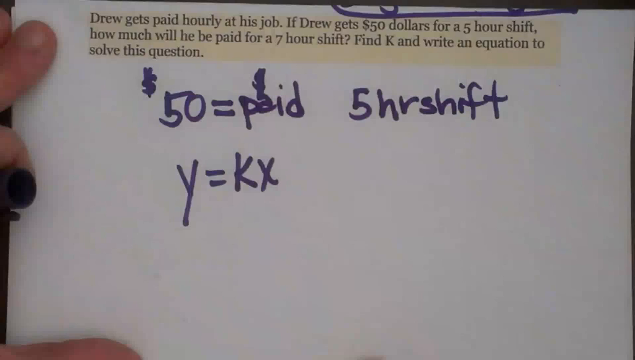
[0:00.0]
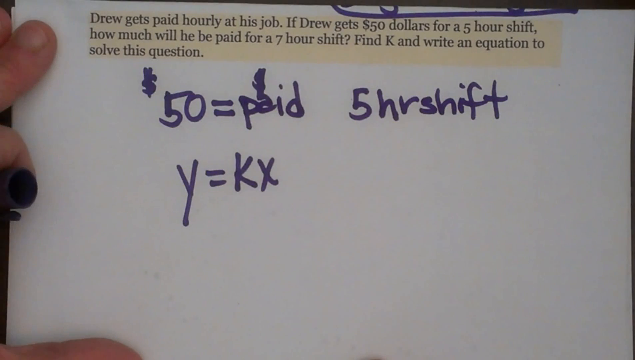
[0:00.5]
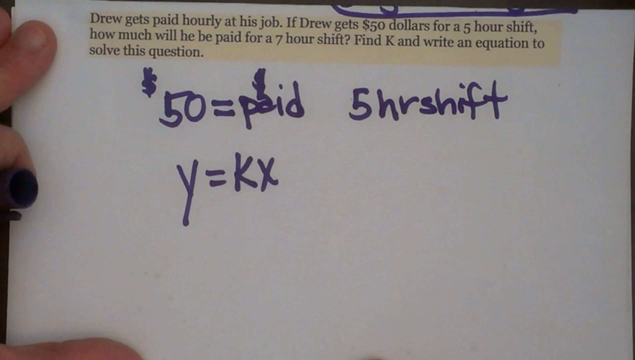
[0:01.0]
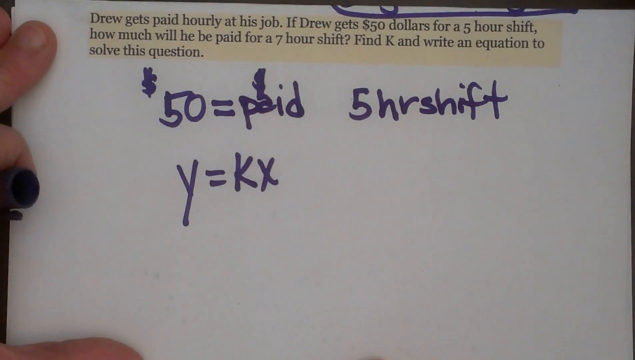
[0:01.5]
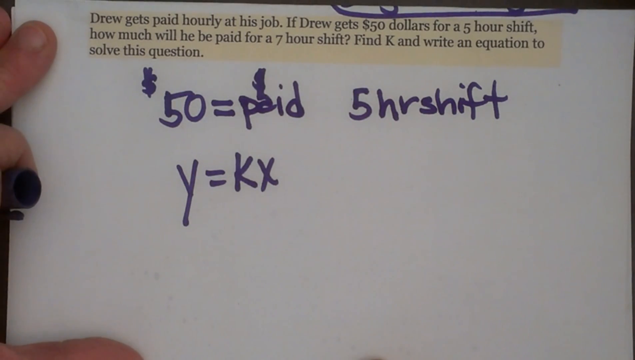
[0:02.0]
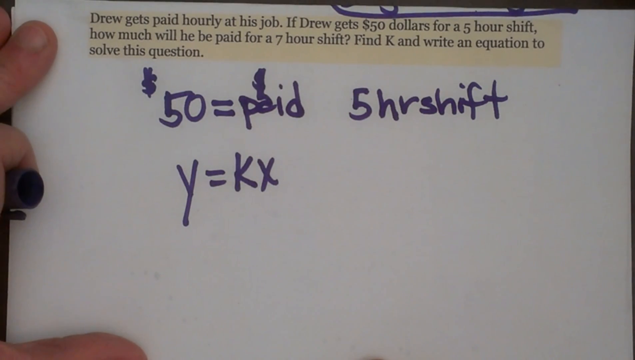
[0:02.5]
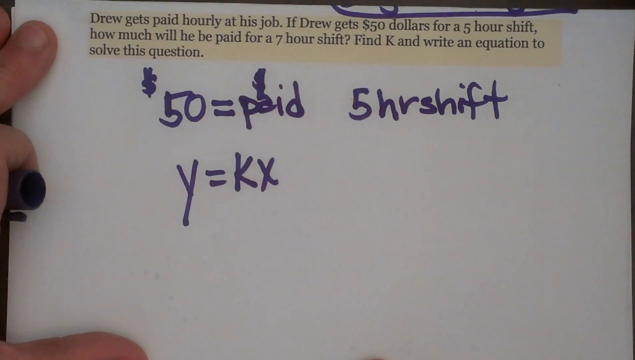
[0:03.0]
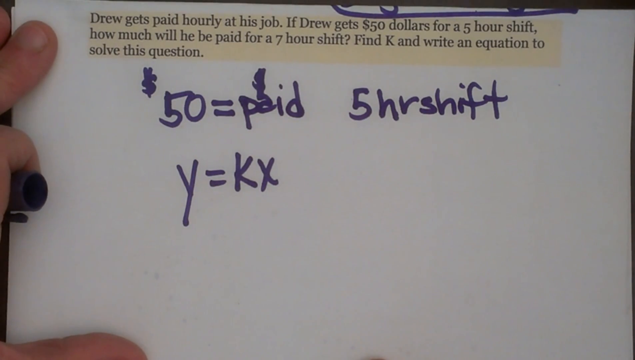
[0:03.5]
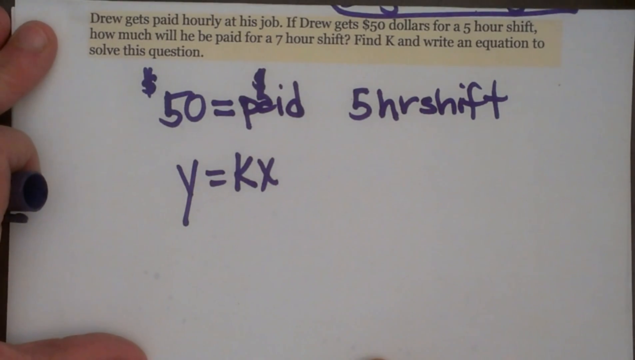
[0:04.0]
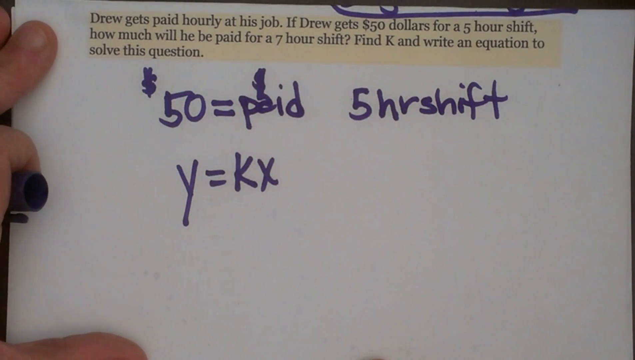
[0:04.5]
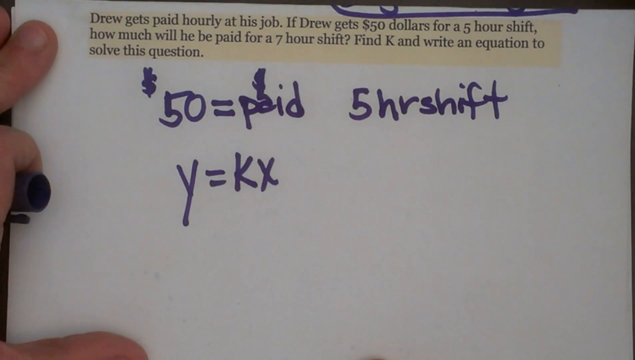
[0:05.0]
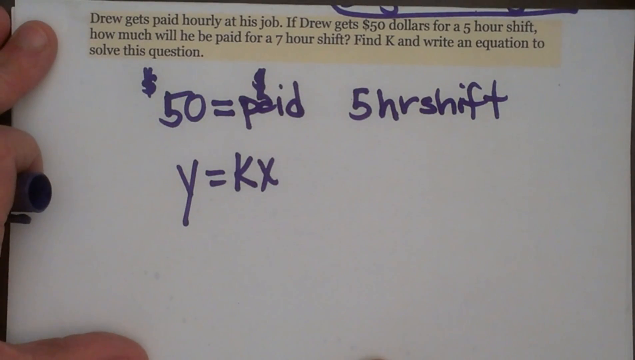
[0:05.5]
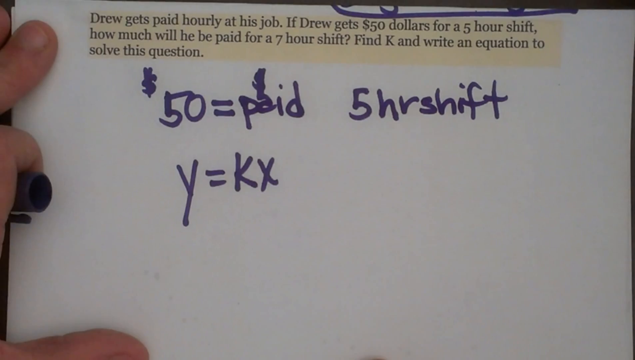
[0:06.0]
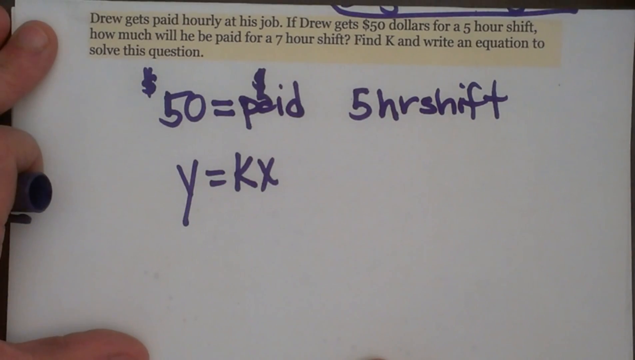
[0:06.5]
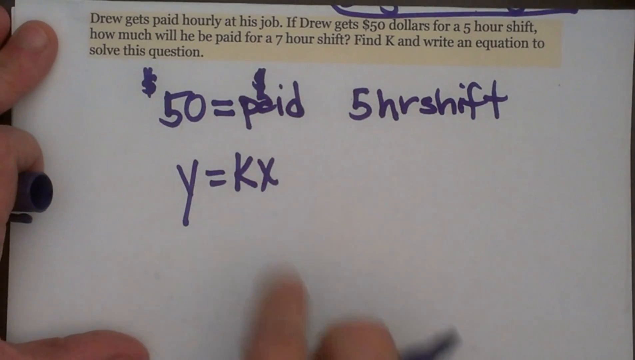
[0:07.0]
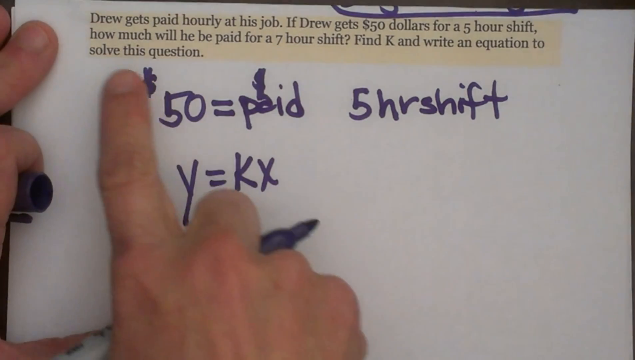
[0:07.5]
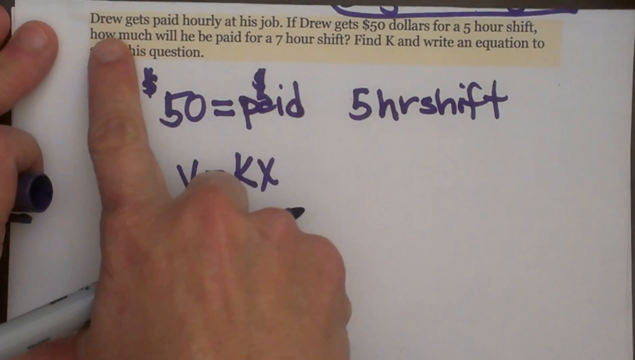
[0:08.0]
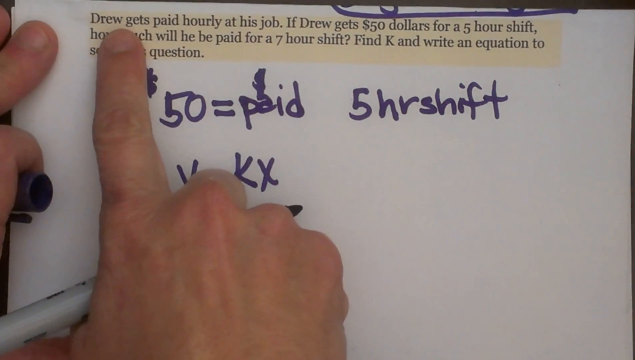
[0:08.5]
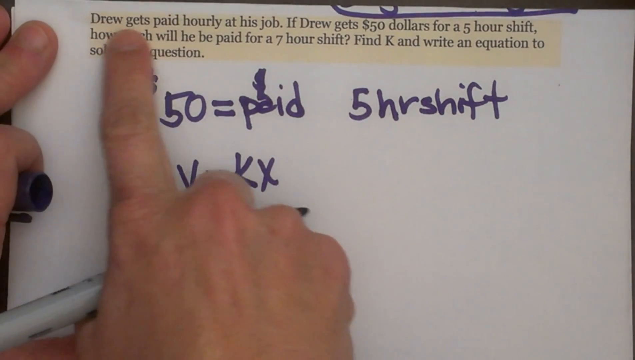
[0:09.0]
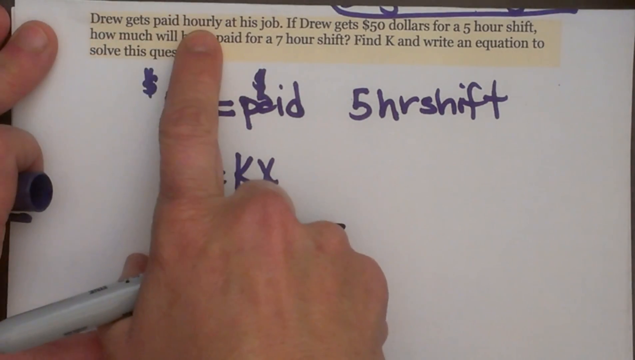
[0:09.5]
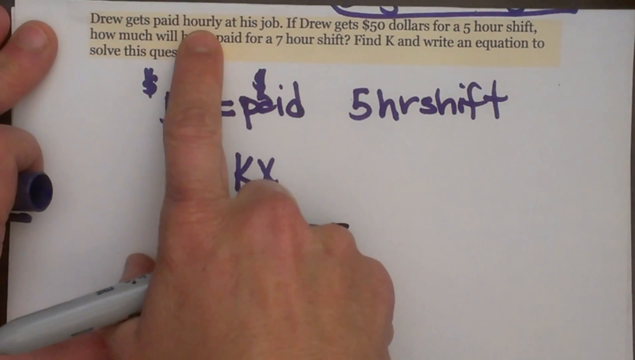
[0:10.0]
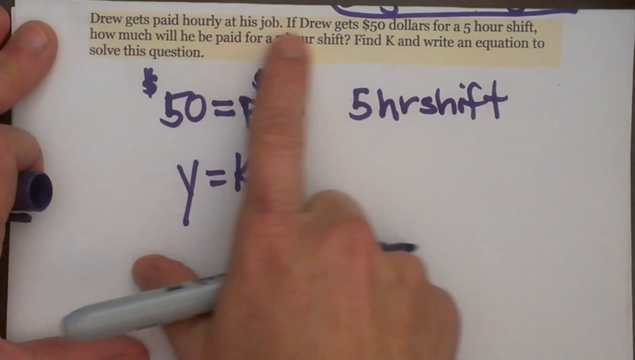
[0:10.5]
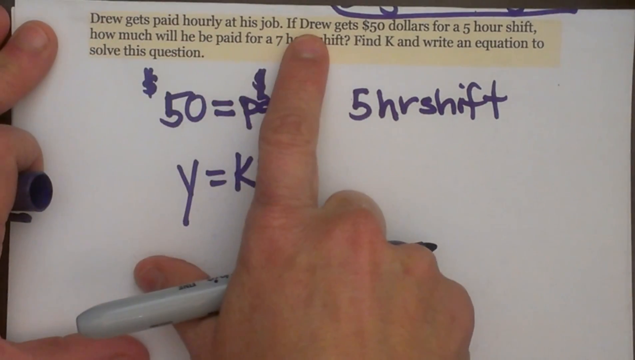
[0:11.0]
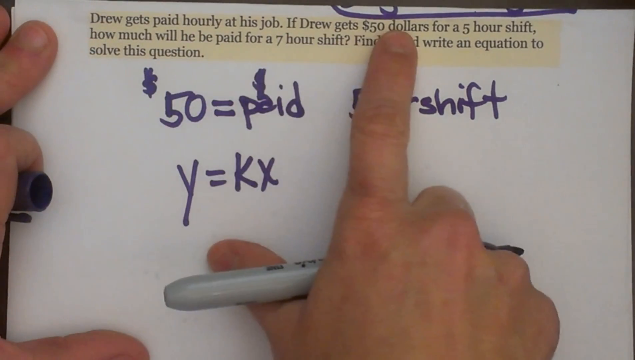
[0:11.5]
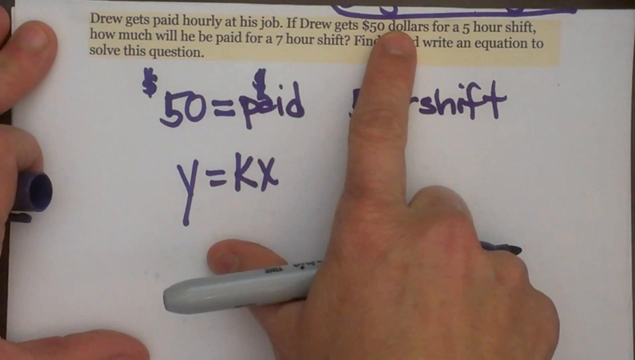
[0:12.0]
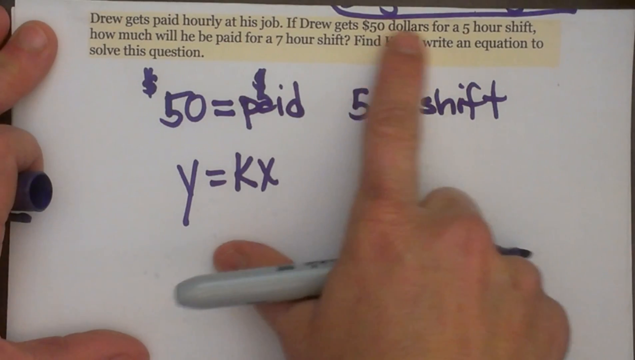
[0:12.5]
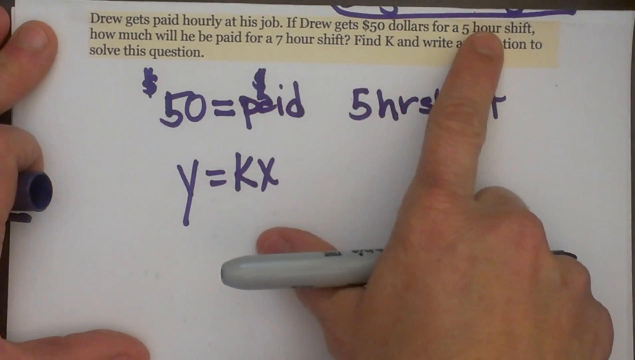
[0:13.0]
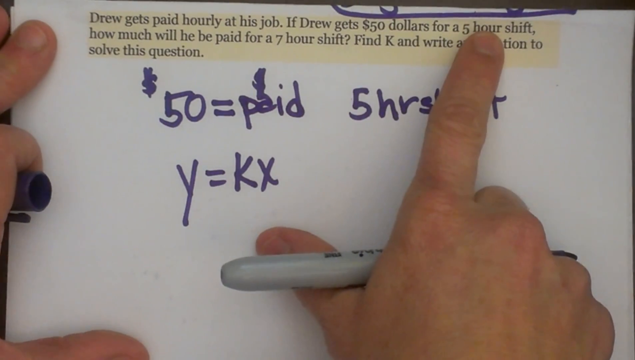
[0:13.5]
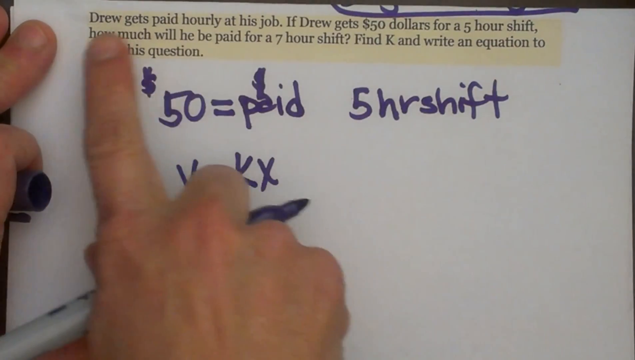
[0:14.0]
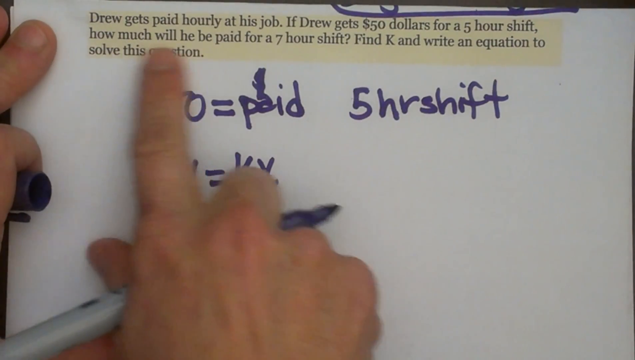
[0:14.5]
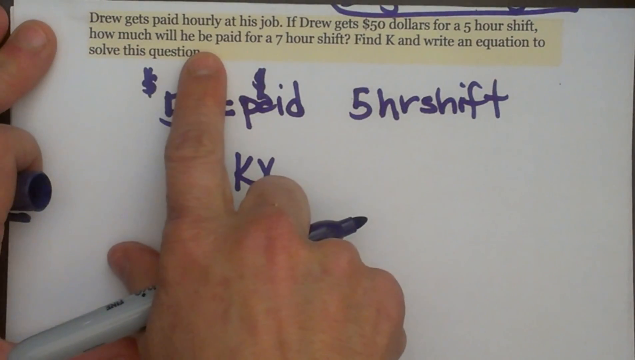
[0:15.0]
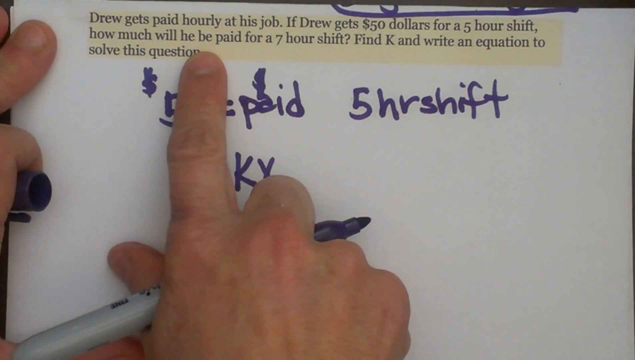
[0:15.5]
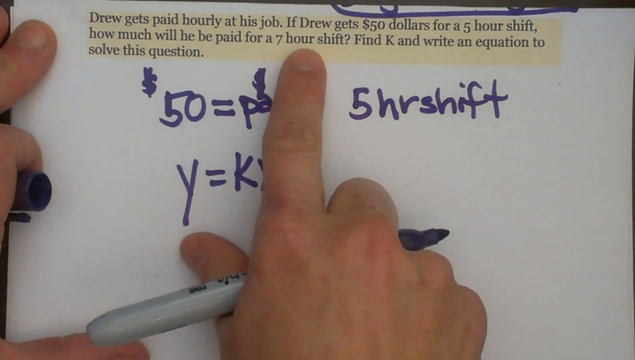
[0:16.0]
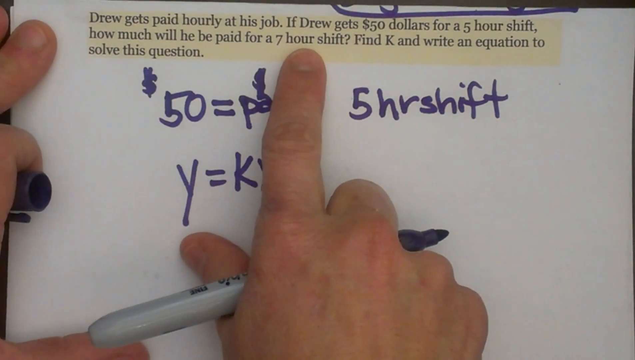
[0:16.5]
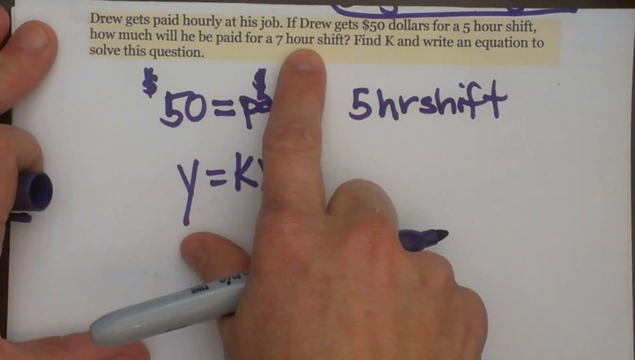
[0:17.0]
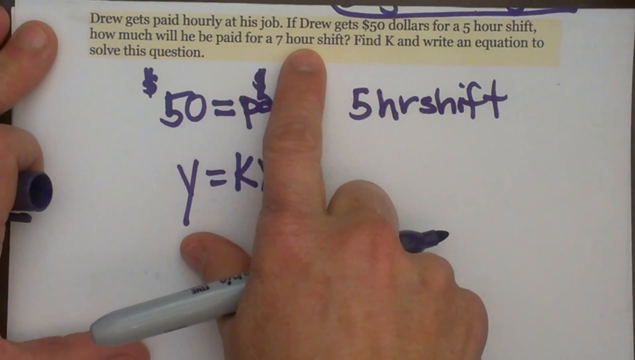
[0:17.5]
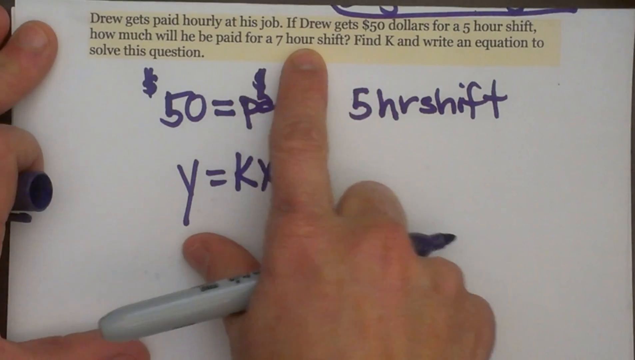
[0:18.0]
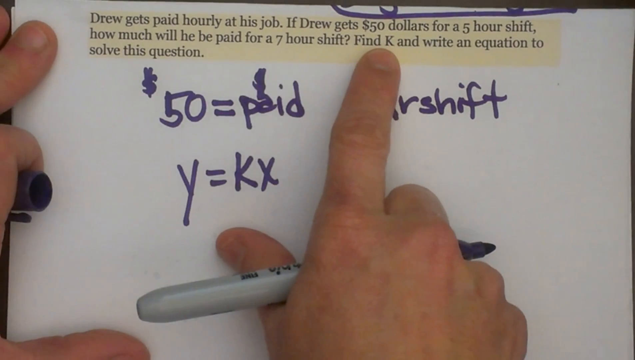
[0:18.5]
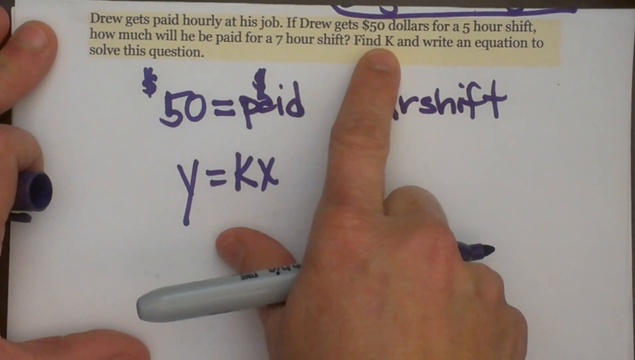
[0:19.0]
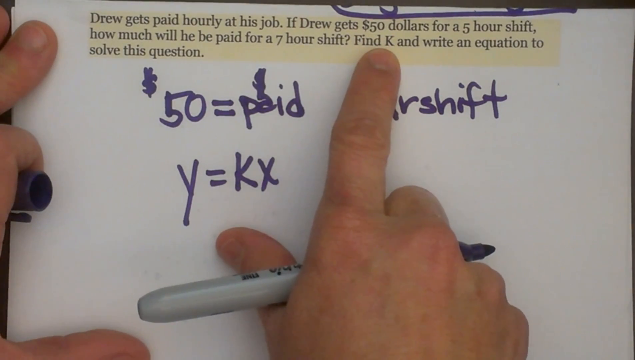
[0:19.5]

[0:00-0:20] A person reads a short paragraph that says "Drew gets paid hourly at his job. If Drew gets $50 for a five-hour shift, how much will be paid for a seven-hour shift? Find K and write an equation to solve this question." The person's right hand holds a Sharpie marker between the thumb and a finger, and the right index finger is placed under each word as it is read. The left hand rests on the paper to hold it down, with the top of the Sharpie cupped in the left index finger. Written on the paper are "$50 = paid", "five-hour shift" and "Y = KX". Something is circled at the top of the frame, but only the bottom portion of the big circle is visible, with something written in the middle.